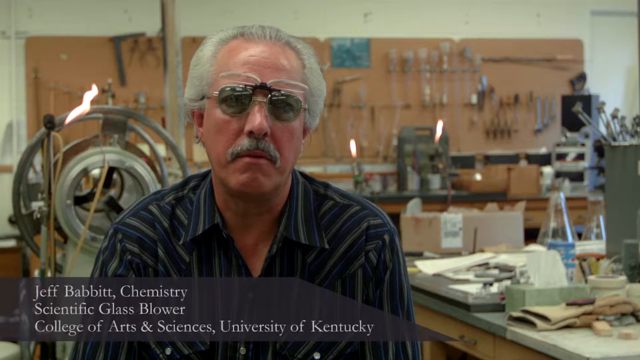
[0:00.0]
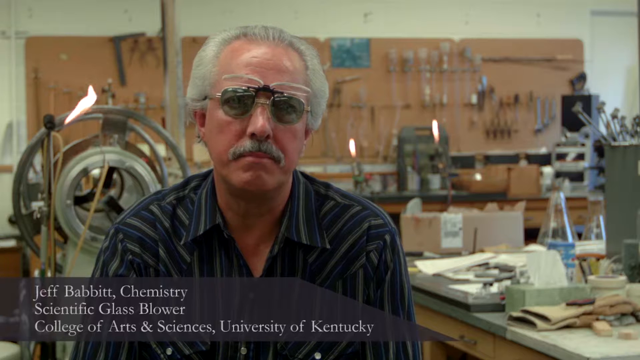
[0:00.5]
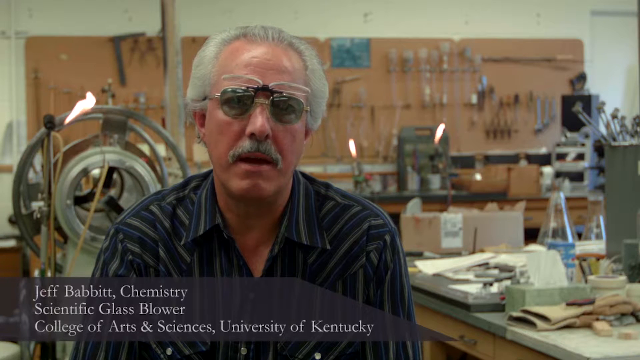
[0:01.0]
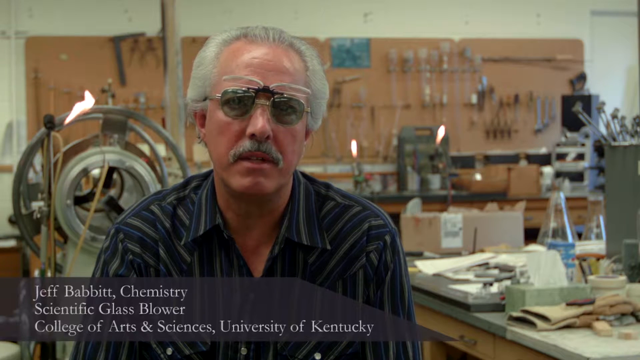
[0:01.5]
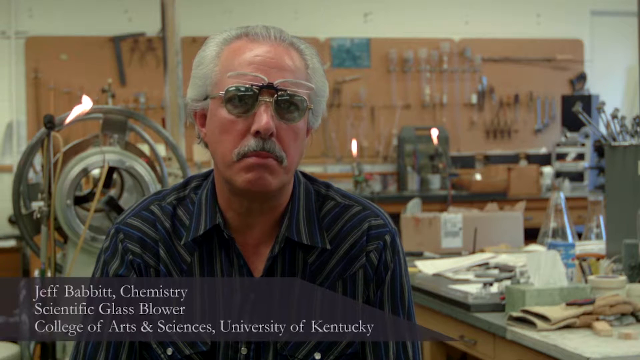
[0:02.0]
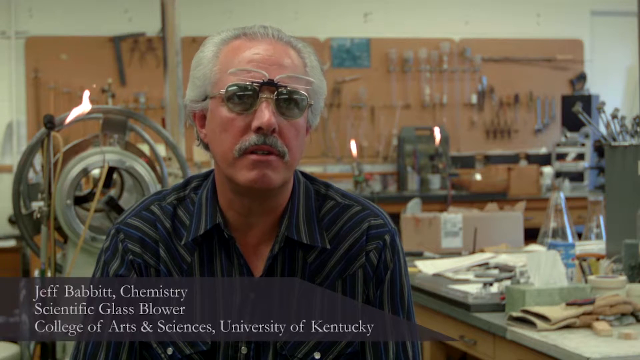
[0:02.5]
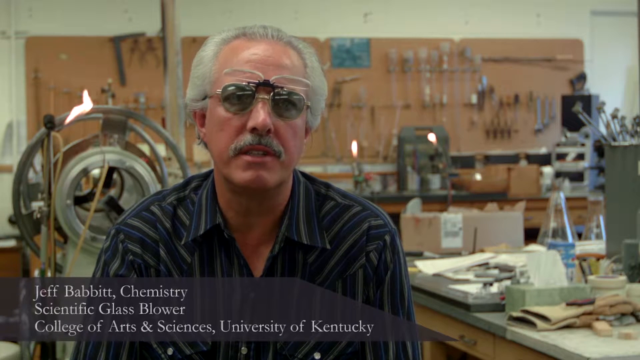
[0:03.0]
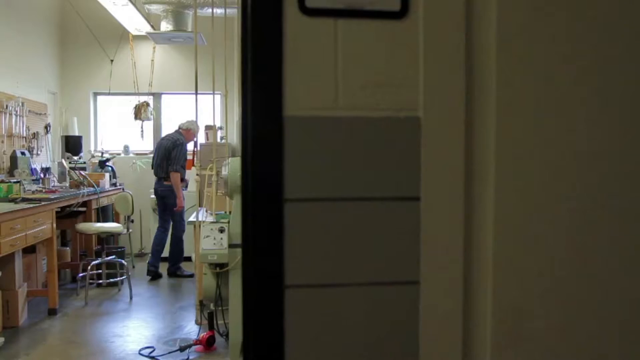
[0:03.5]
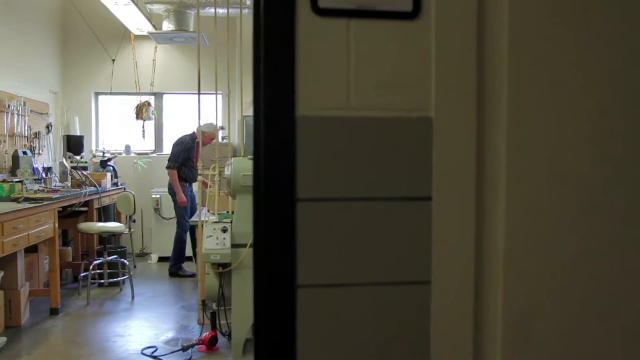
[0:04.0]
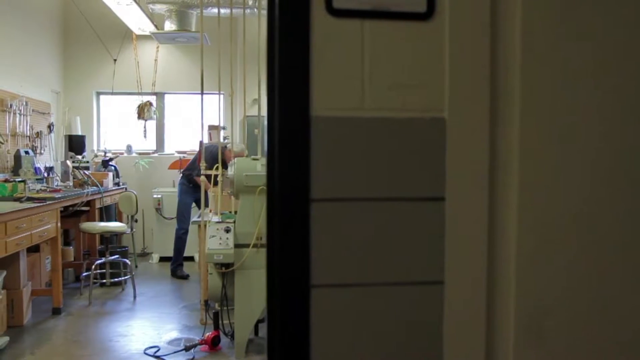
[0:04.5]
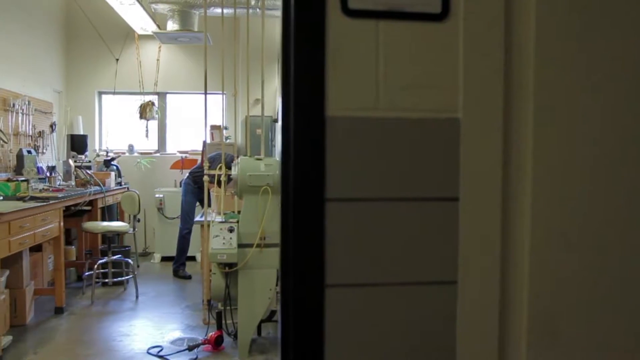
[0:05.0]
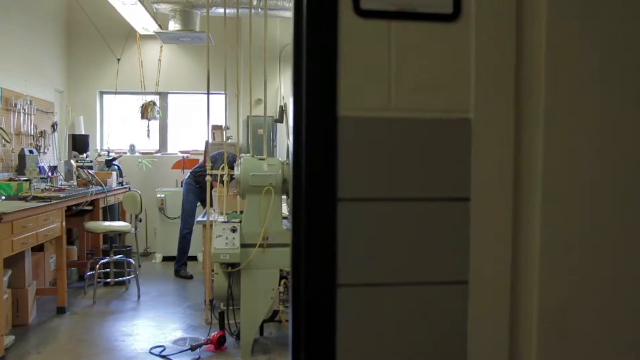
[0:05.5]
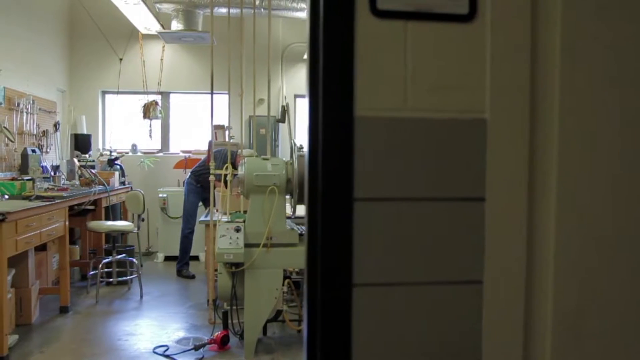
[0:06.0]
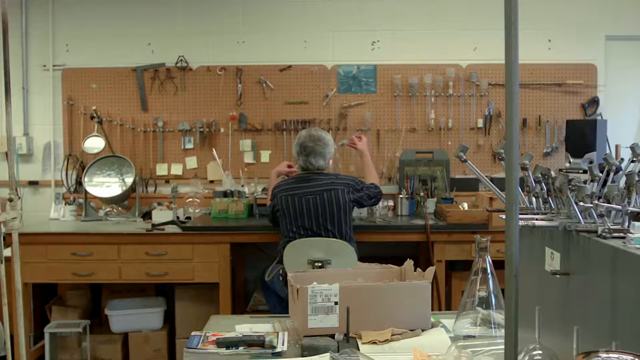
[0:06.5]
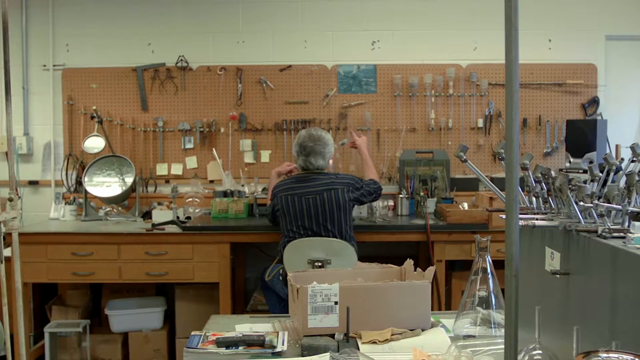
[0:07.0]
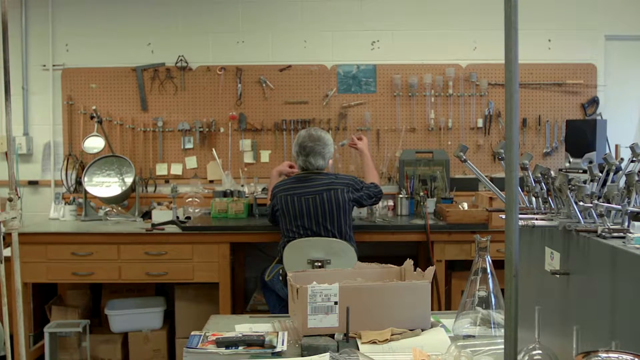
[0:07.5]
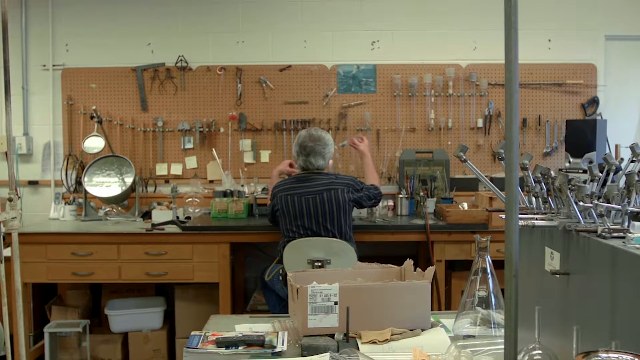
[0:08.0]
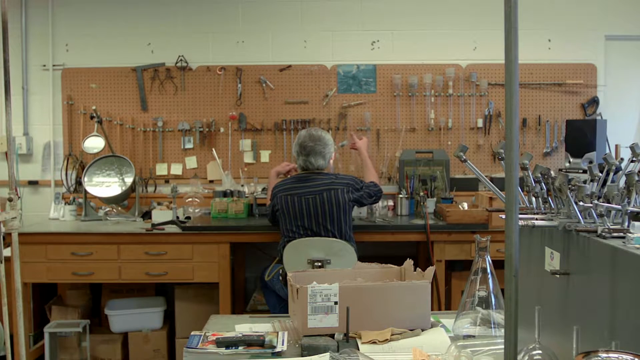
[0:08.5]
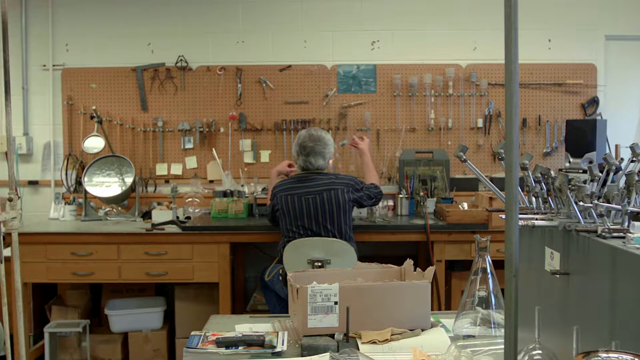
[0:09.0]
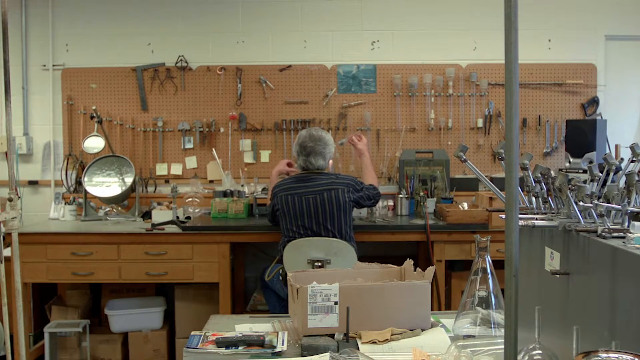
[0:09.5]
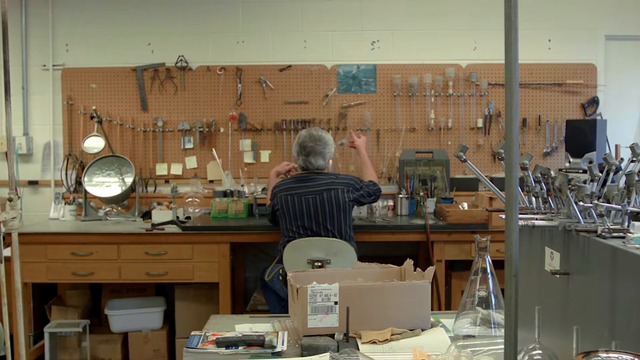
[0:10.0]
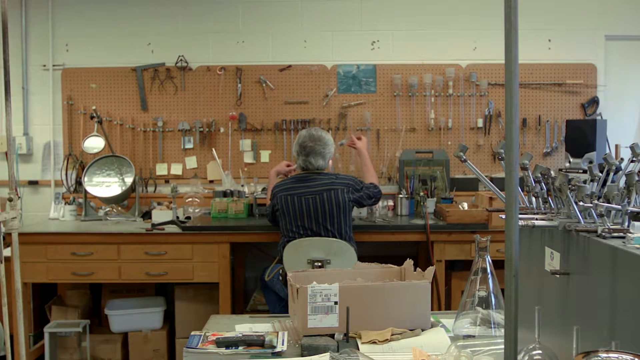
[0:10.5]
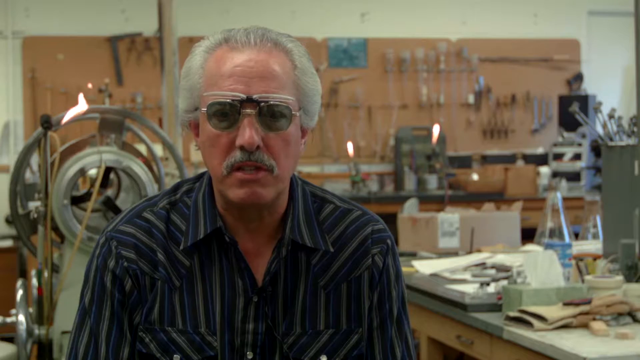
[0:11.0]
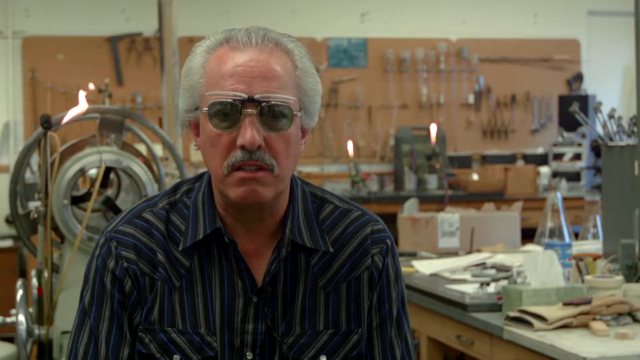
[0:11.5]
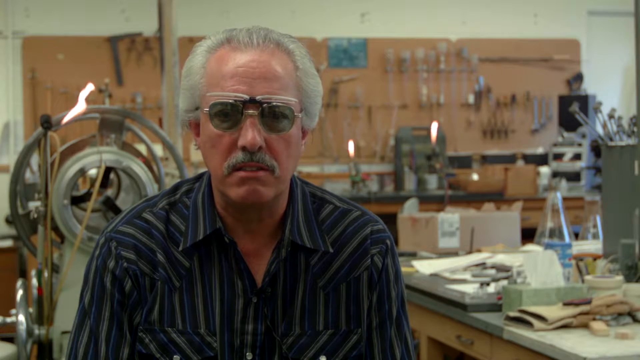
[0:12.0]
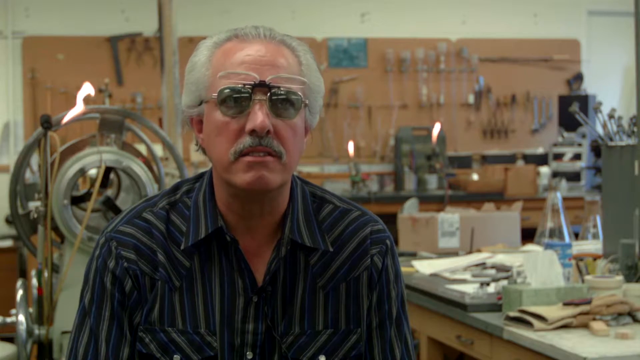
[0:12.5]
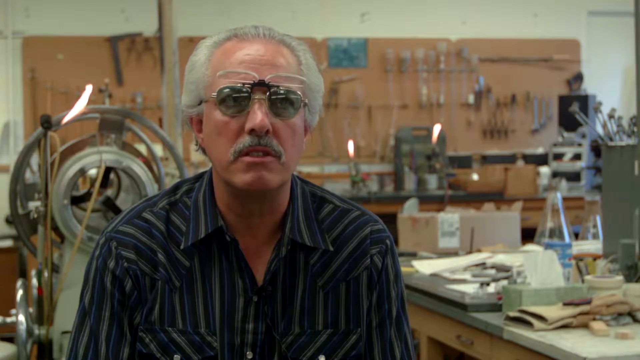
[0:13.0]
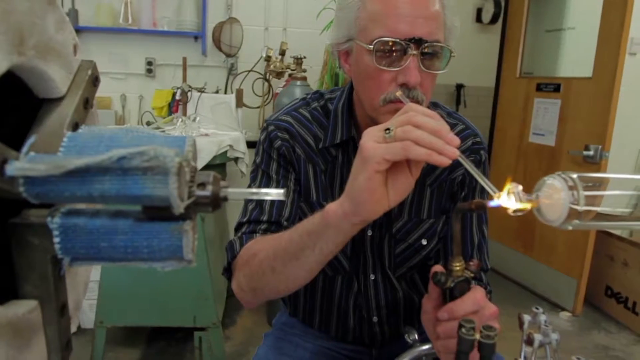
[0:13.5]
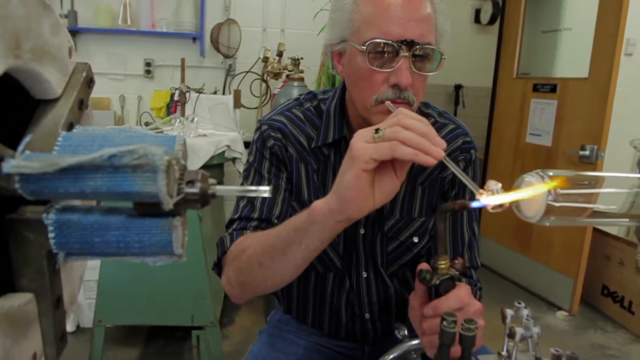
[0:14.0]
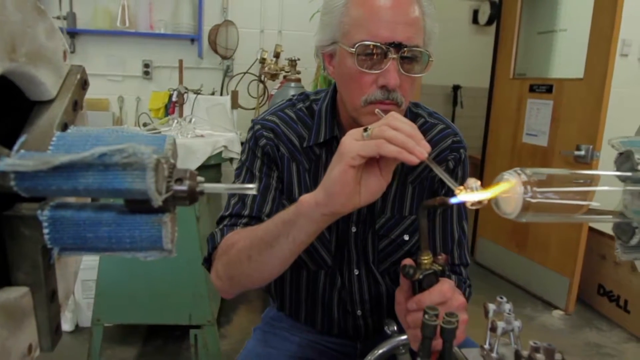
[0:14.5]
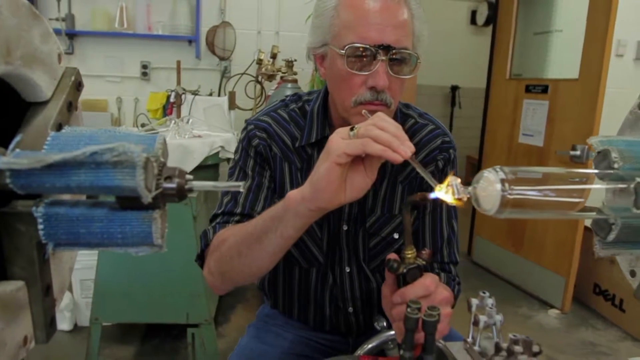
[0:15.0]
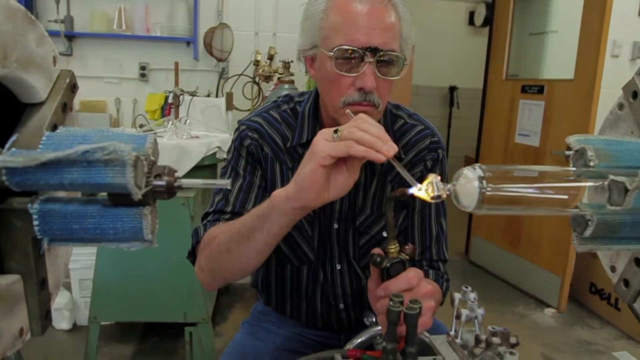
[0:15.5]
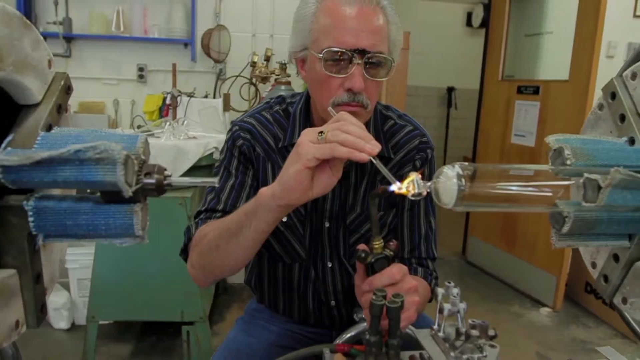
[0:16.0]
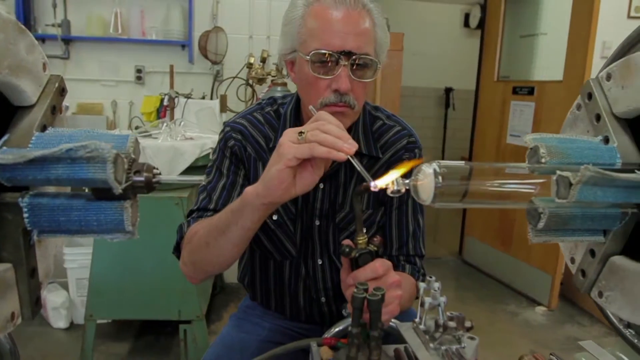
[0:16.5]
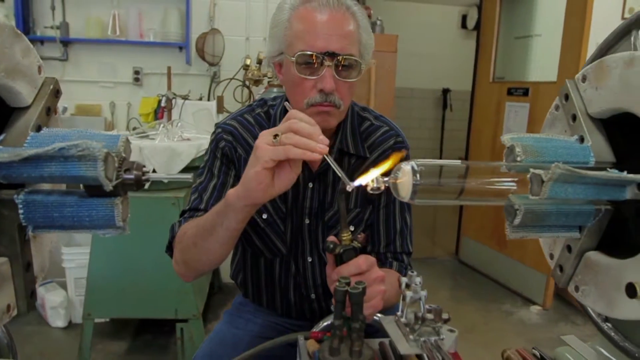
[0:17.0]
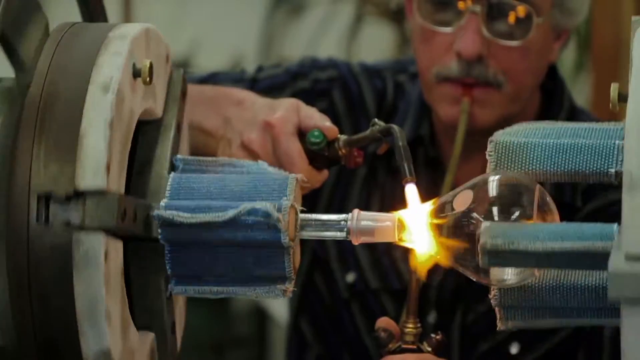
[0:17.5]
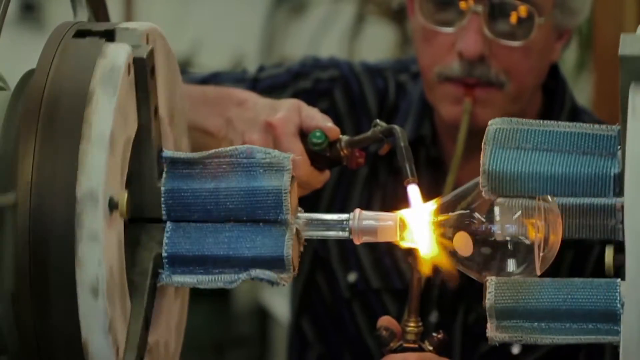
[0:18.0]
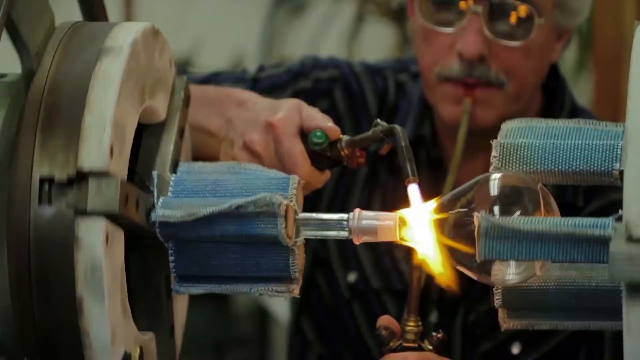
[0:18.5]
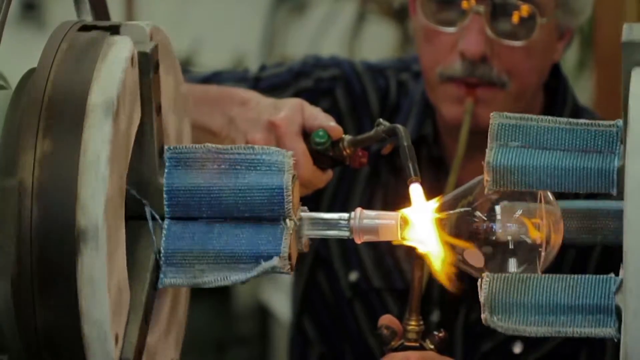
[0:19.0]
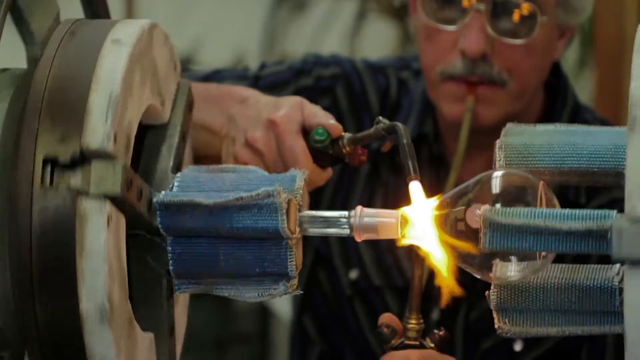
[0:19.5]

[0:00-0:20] The video features Mr. Jeff Babbitt, a chemistry scientific glass blower who went to the College of Arts and Sciences at the University of Kentucky in America. He looks to be in his mid-50s, with grey hair; he wears glasses and a striped blue and dark green shirt. Behind him is what appears to be a garage full of many tools. He goes to another part of the garage, takes up a few tools and starts putting them together. He talks while facing the camera and seems to be holding two tools, one of which is burning: a tool that burns glass. He seems to be trying to mould a piece of glass.